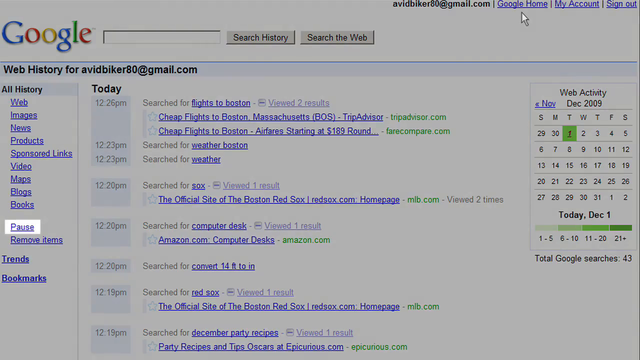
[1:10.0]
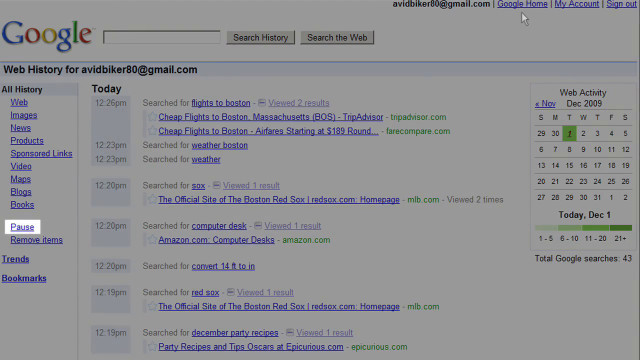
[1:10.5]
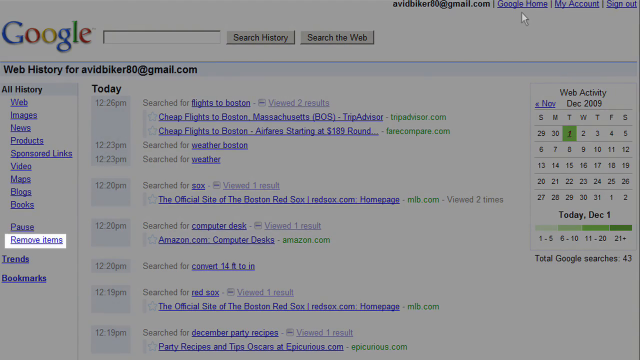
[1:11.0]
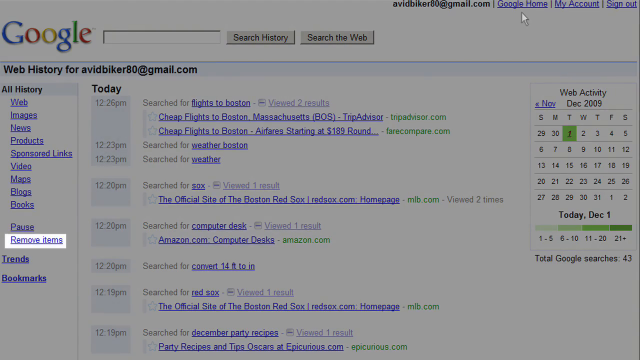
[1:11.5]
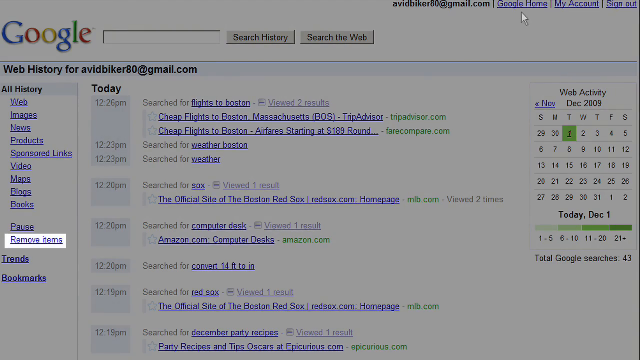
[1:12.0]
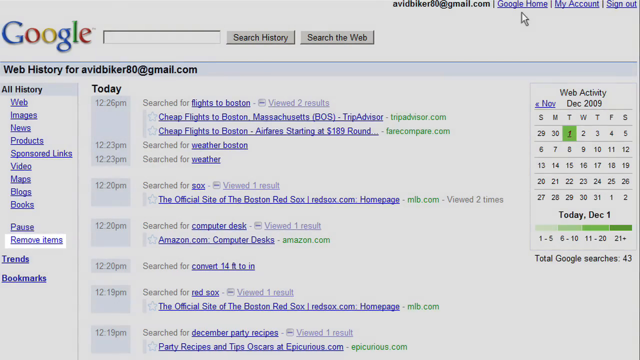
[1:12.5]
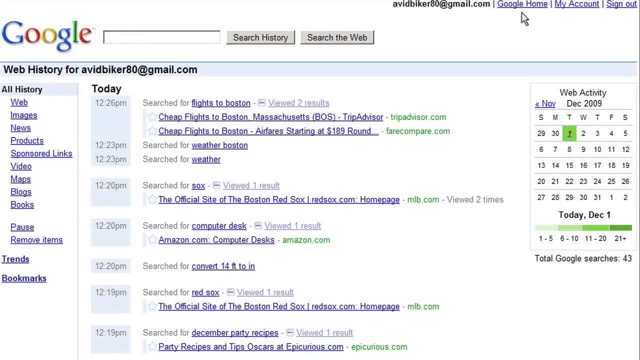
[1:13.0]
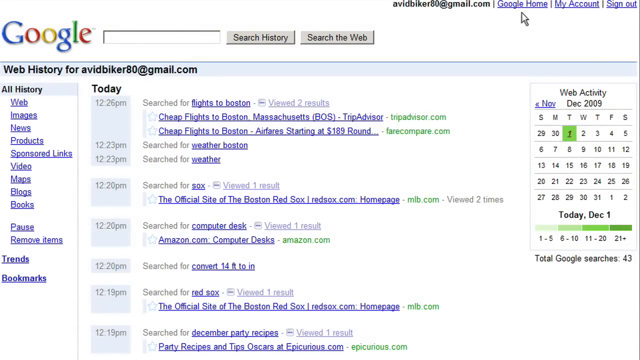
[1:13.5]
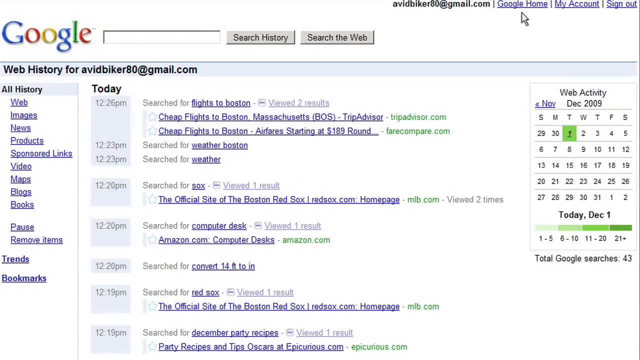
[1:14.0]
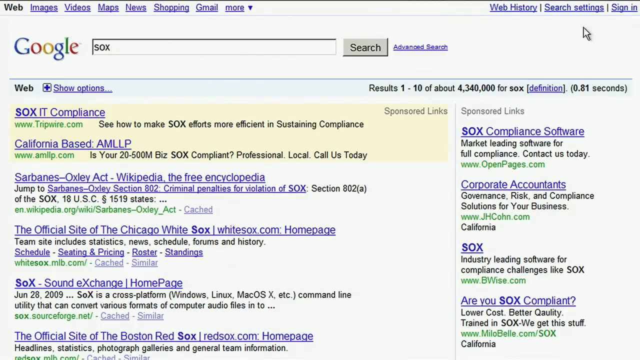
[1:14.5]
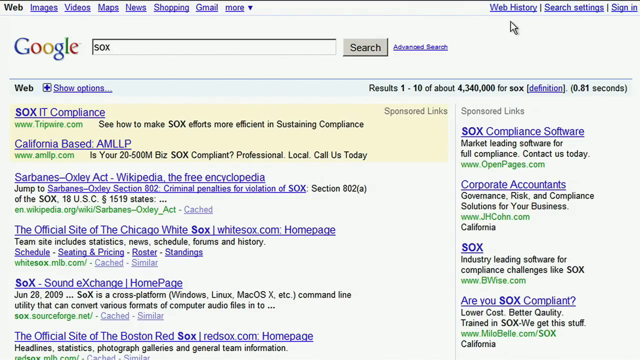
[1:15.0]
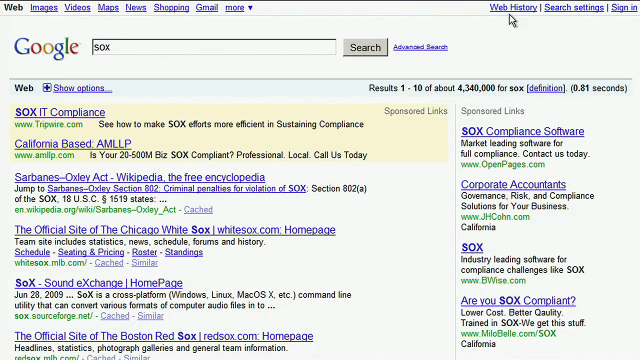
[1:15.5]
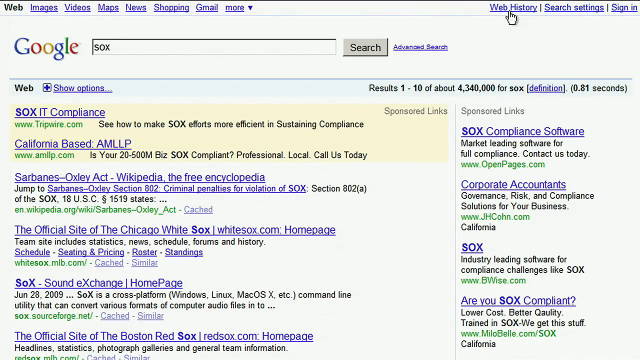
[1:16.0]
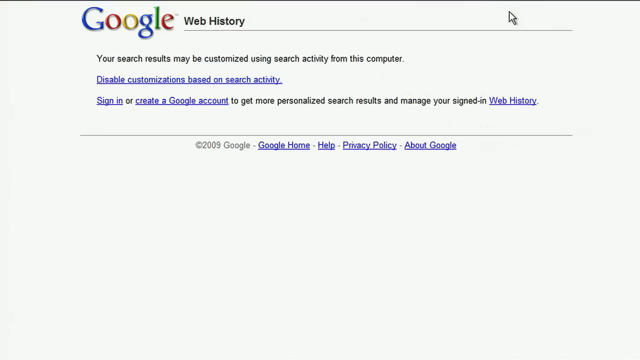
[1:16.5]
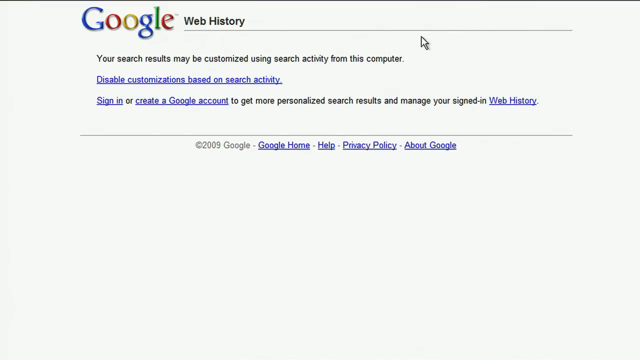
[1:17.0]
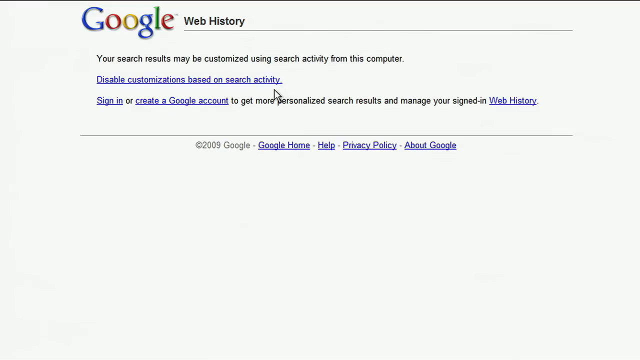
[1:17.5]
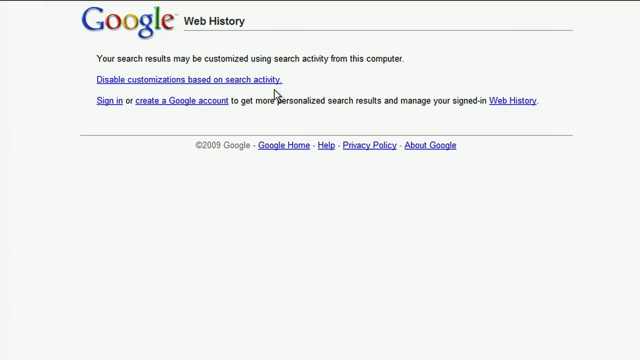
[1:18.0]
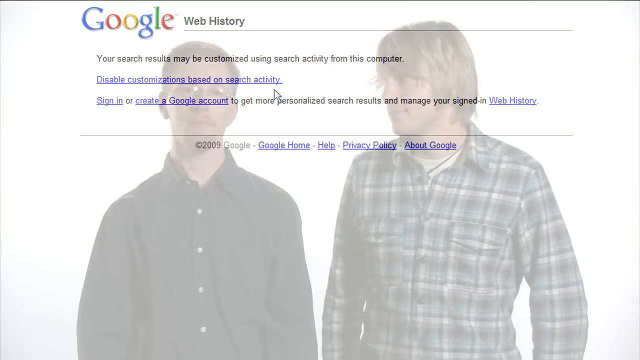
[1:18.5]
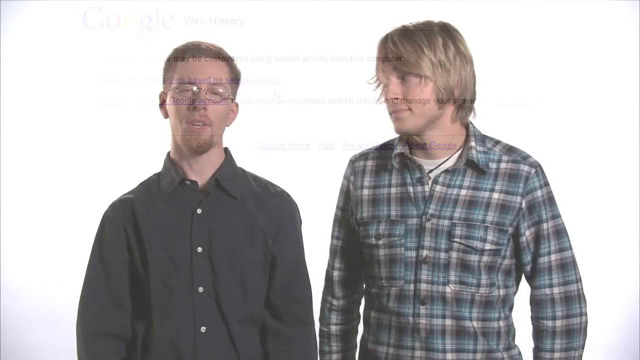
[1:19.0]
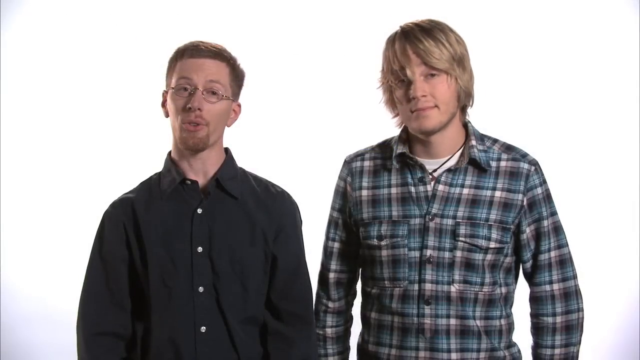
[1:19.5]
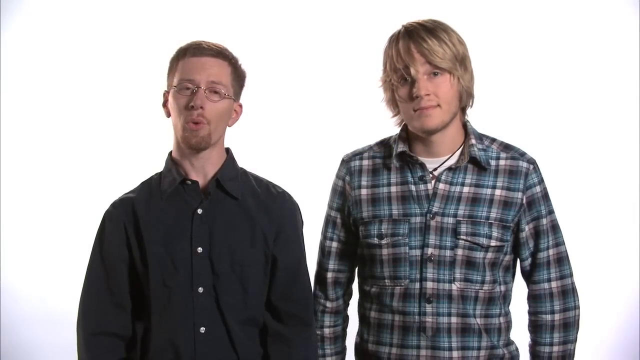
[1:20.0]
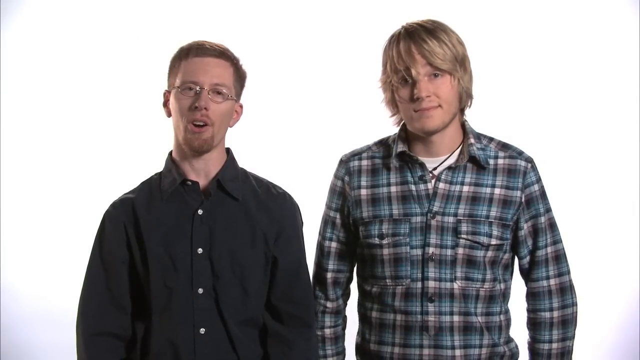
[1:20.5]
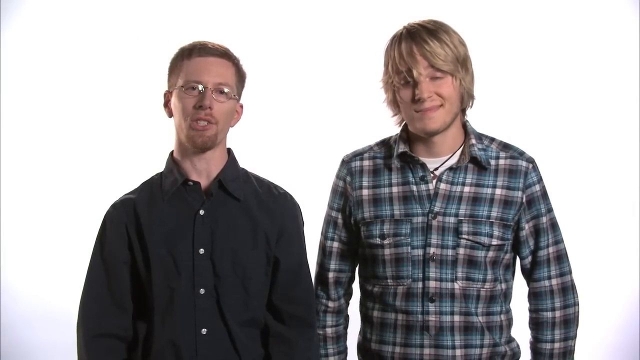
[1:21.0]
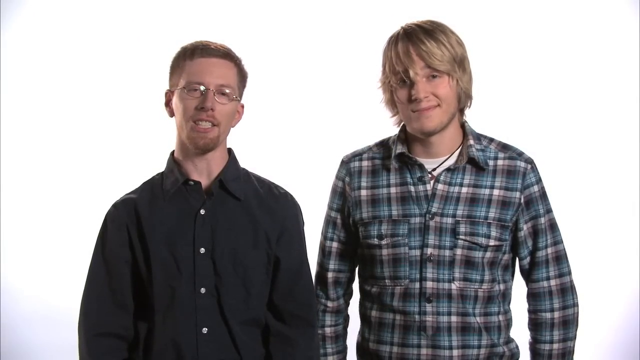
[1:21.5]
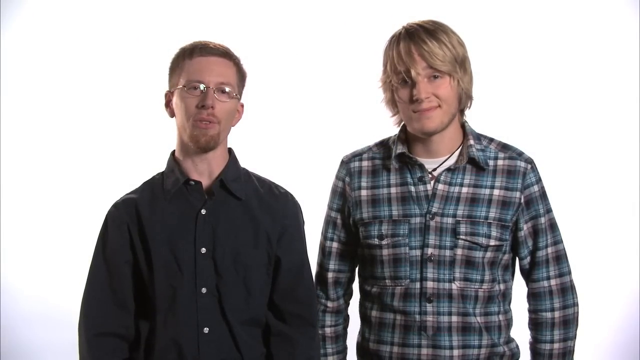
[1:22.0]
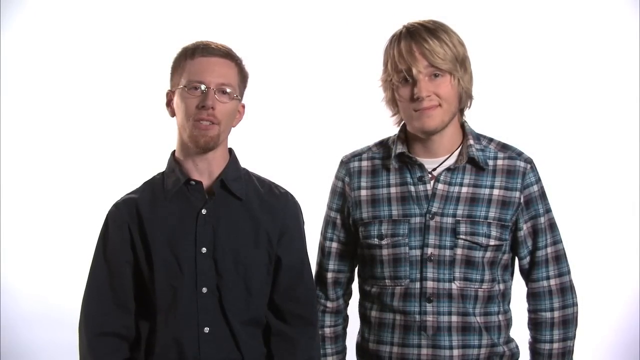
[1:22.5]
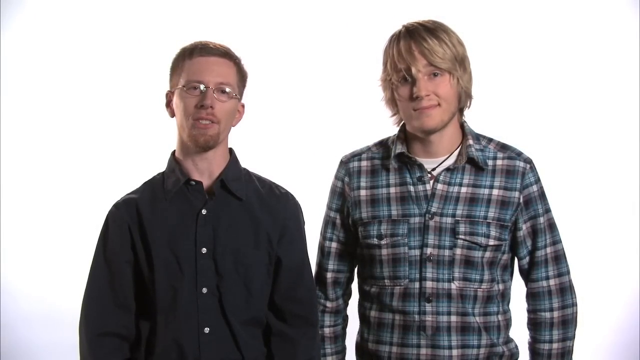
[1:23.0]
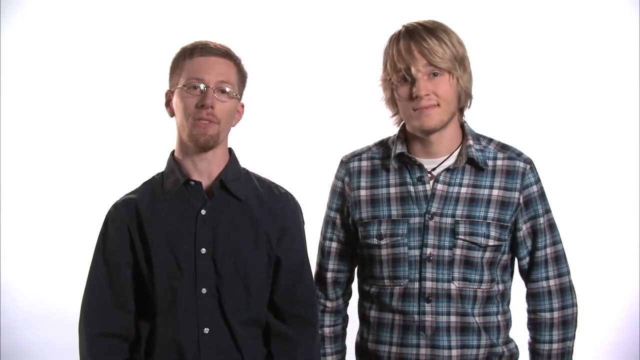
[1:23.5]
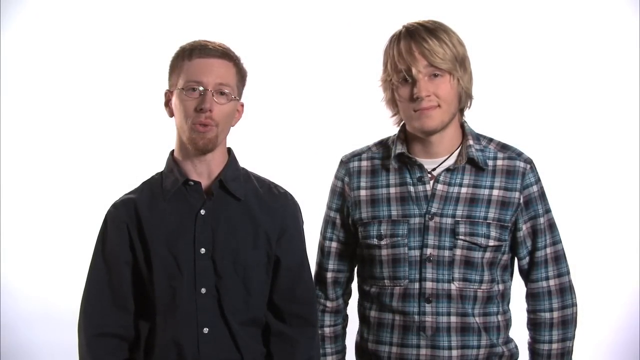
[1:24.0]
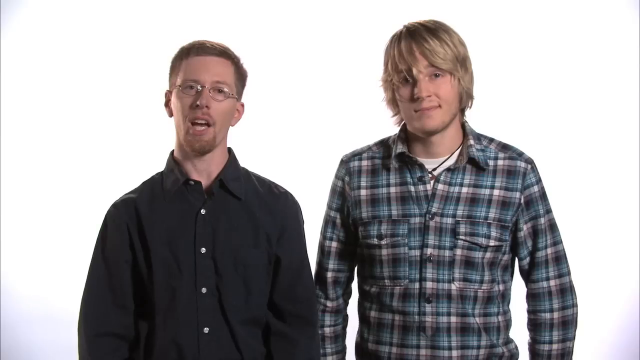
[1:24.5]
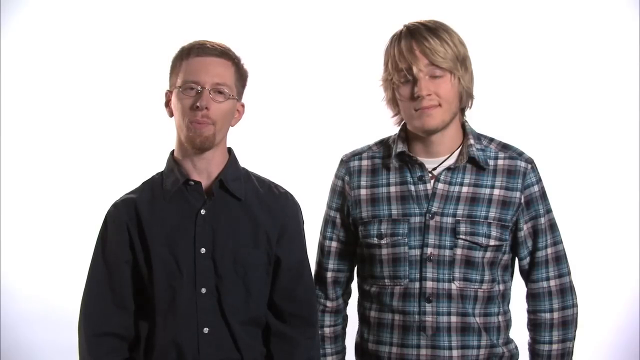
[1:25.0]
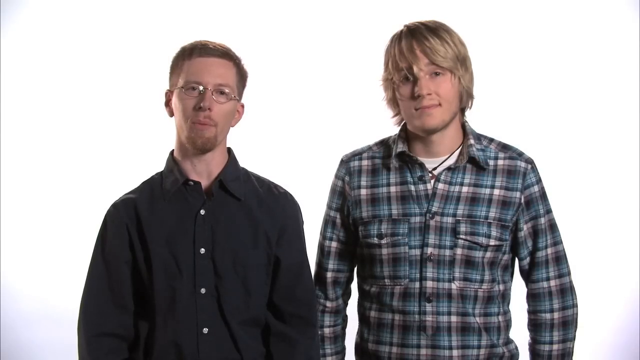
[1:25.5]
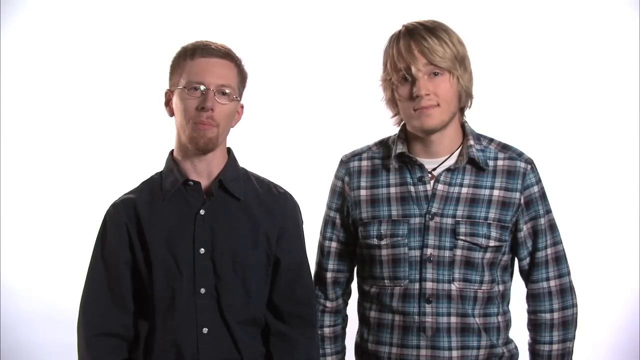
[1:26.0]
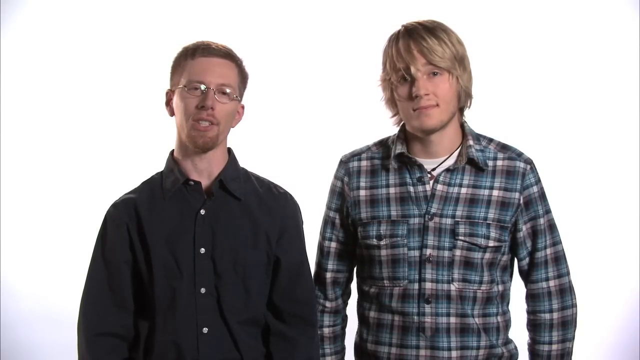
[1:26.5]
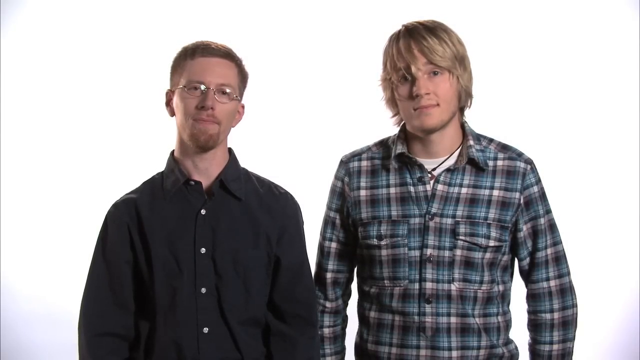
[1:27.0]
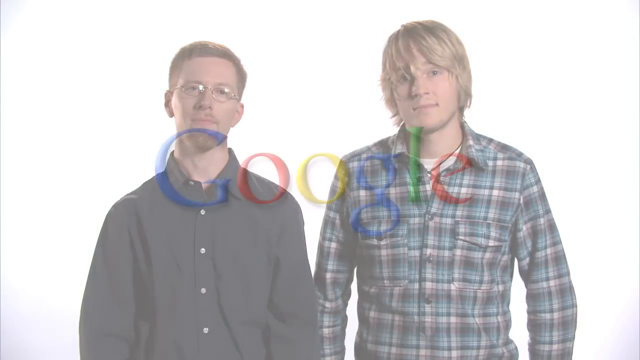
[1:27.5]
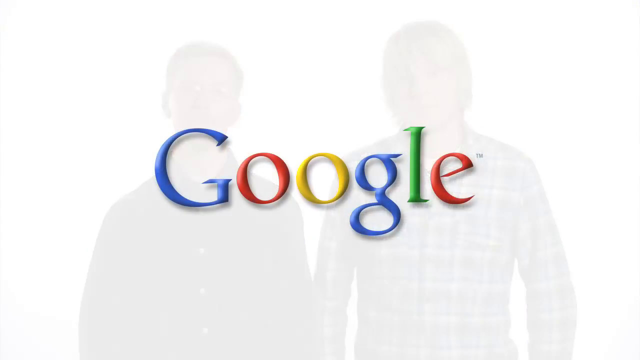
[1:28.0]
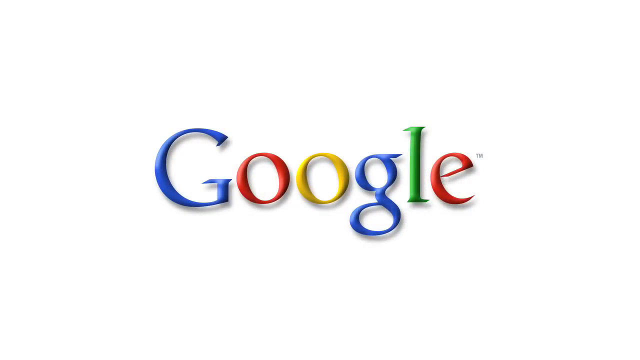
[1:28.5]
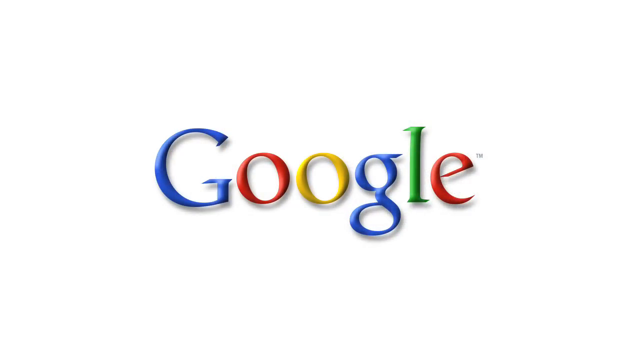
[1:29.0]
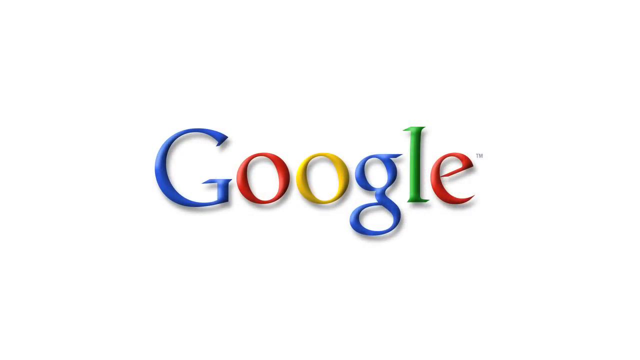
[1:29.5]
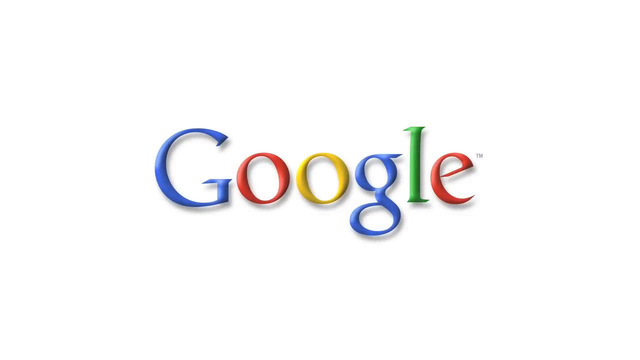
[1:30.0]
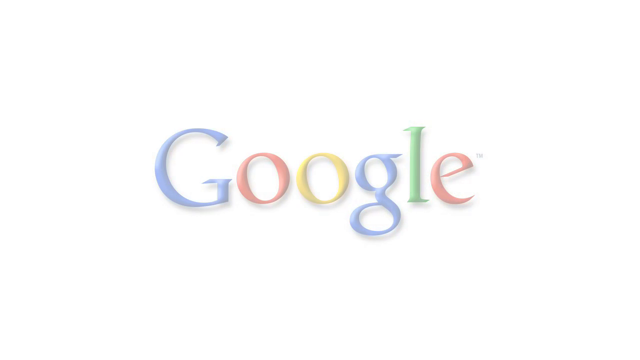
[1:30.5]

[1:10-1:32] The screen is slightly grayed out but everything is still visible, and in the left menu the words "Remove Items" are highlighted in white. The whole screen lights up again. The cursor clicks on "Web History", changing to a hand when it touches the link, and the hourglass icon appears. A page opens with Google in its colorful font at the top, titled "Web History". It reads "Your search results may be customized using search activity from this computer," followed by a few options. The cursor slides to the center of the screen, pointing to the option for disabled customization based on search activity. The screen fades, and Brian and Robby appear; Robby looks at Brian and then at the camera as Brian talks. They fade out and the name Google appears in its colorful font.